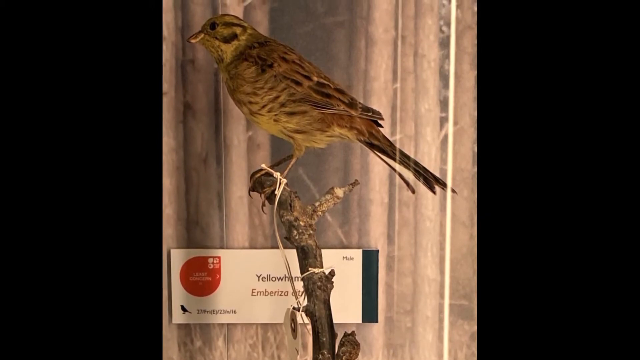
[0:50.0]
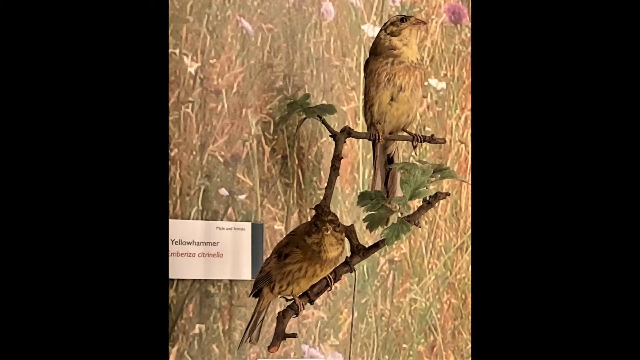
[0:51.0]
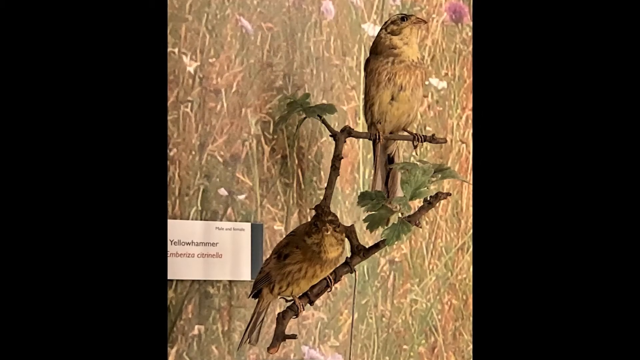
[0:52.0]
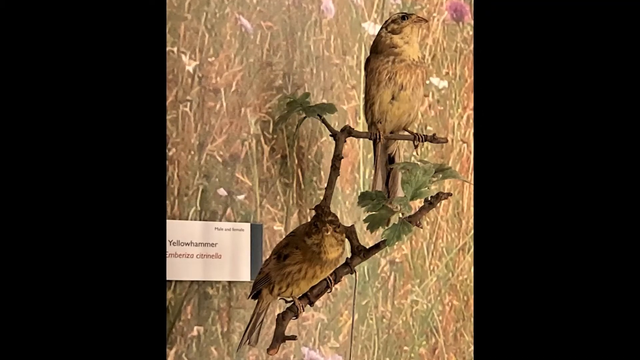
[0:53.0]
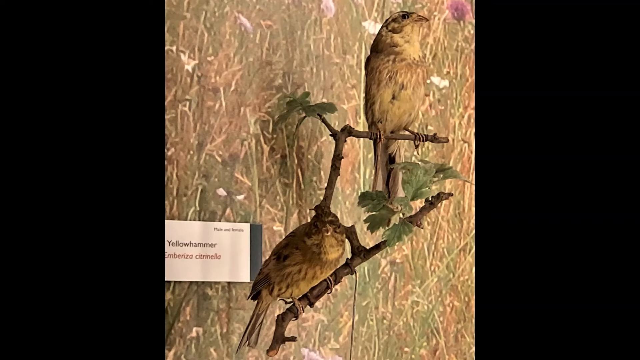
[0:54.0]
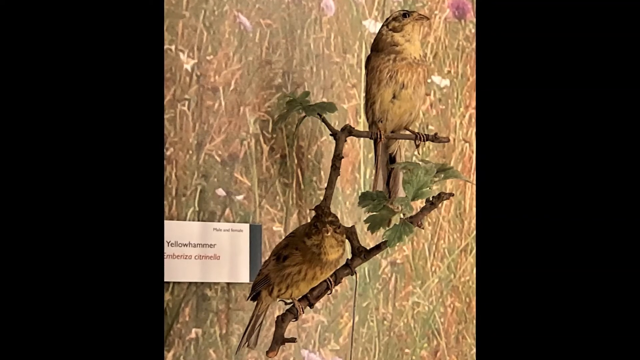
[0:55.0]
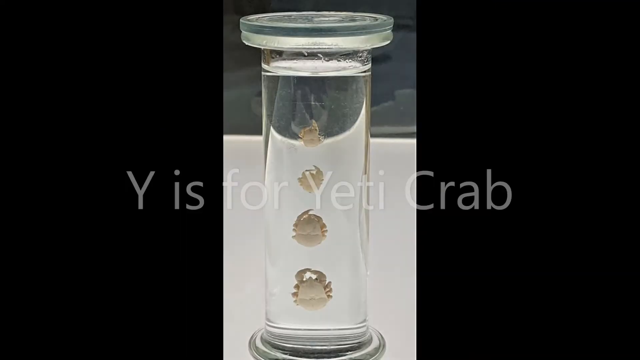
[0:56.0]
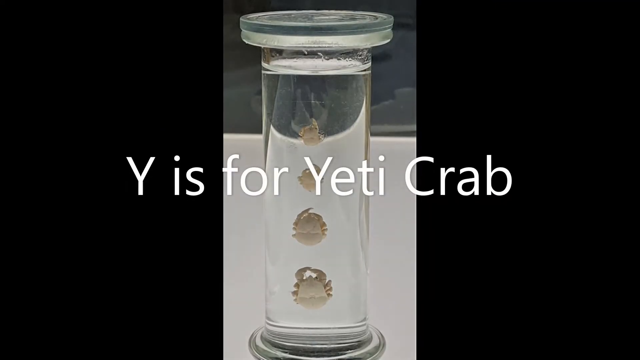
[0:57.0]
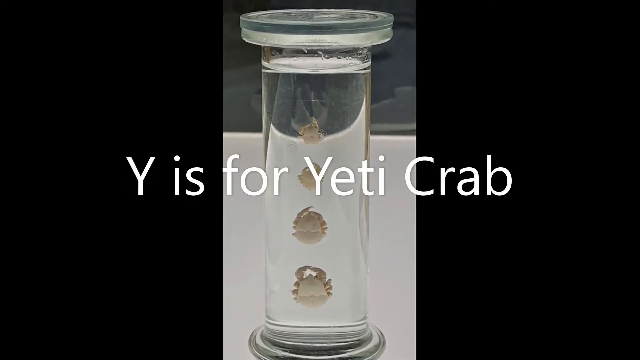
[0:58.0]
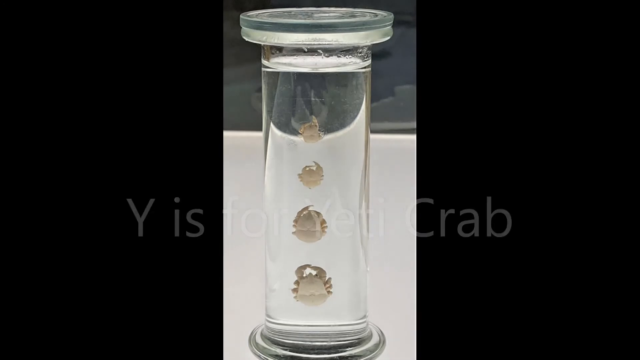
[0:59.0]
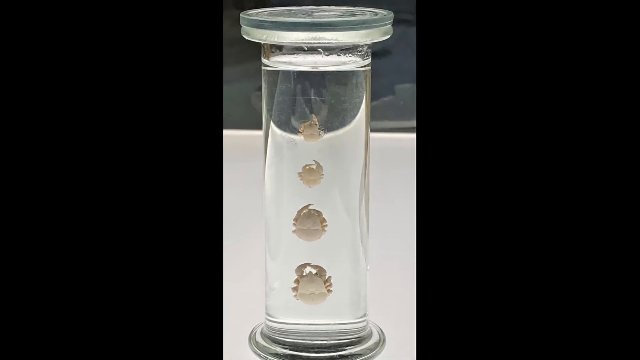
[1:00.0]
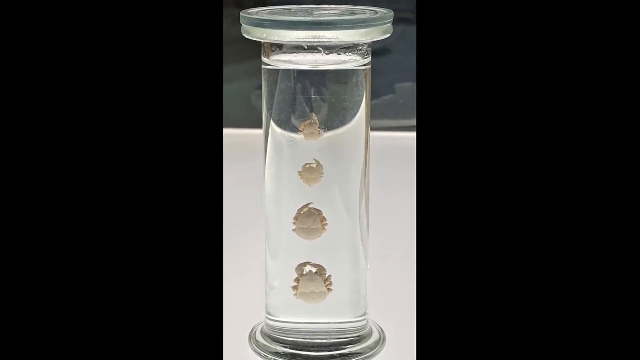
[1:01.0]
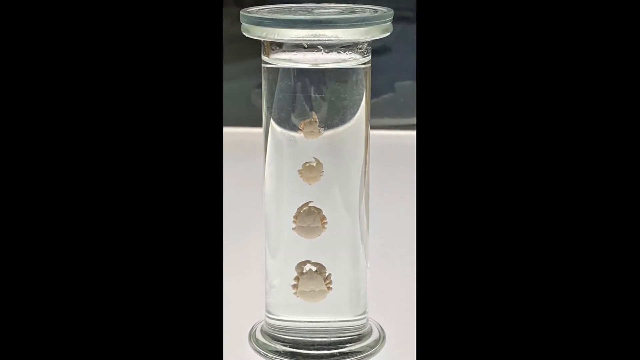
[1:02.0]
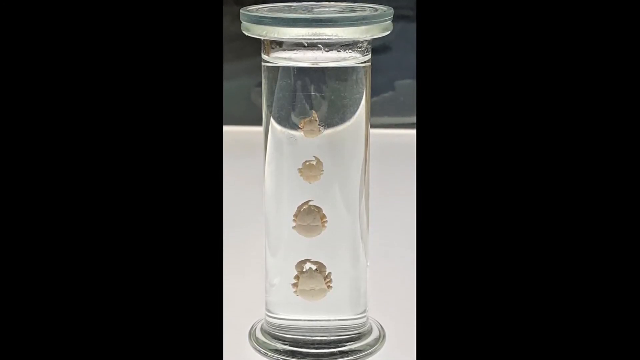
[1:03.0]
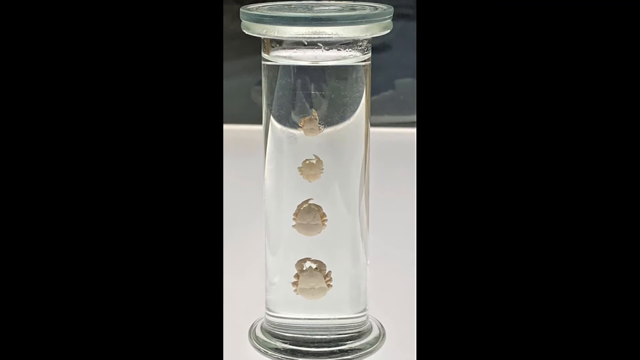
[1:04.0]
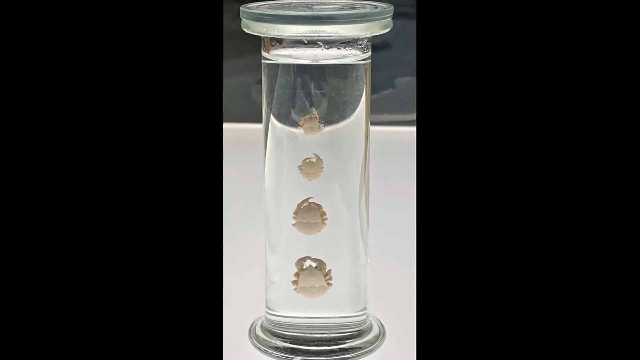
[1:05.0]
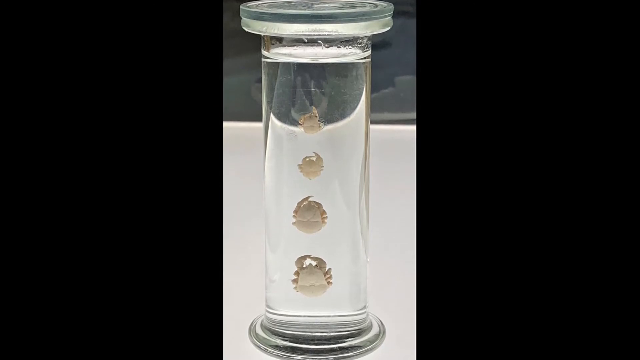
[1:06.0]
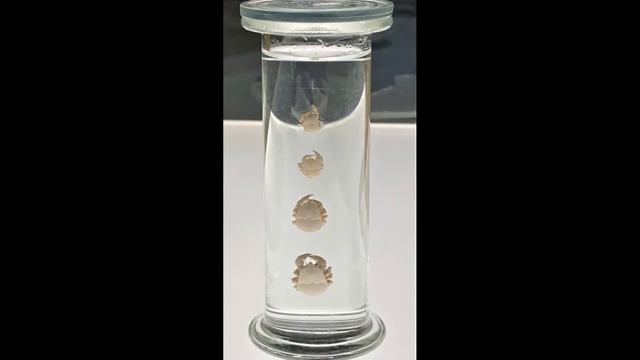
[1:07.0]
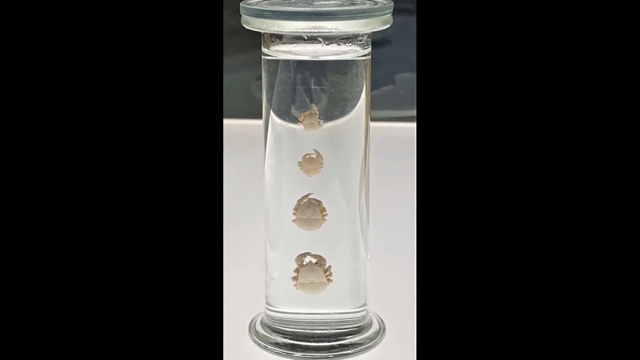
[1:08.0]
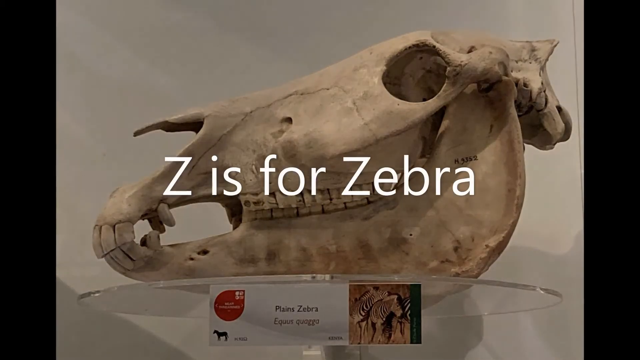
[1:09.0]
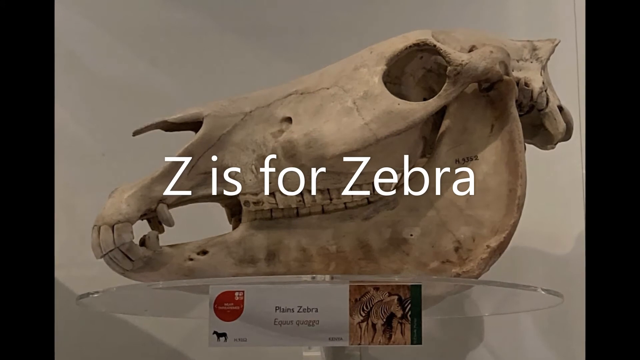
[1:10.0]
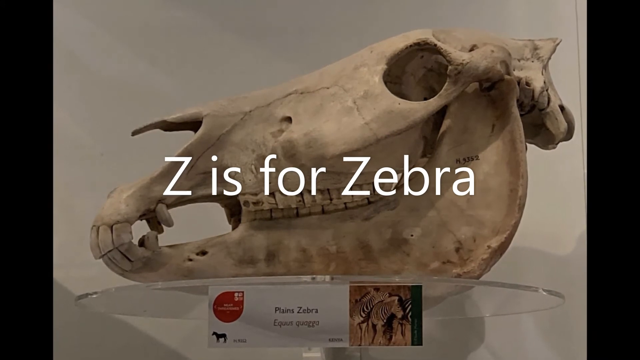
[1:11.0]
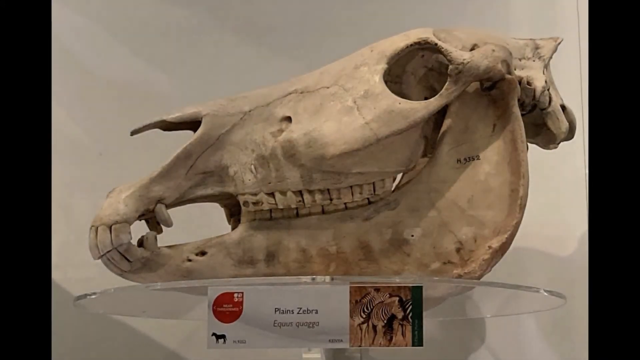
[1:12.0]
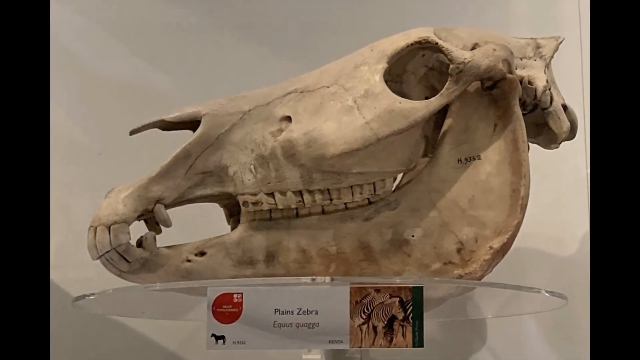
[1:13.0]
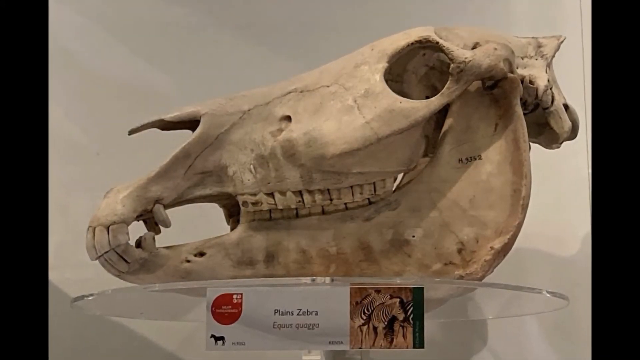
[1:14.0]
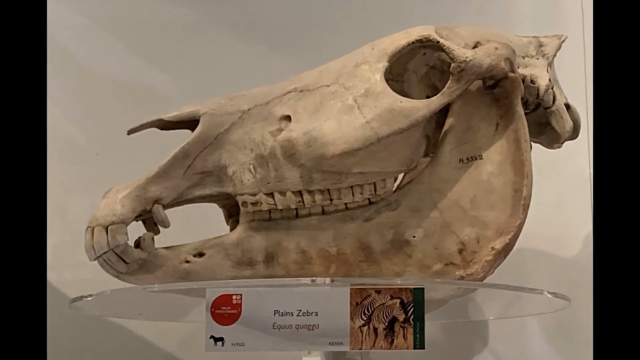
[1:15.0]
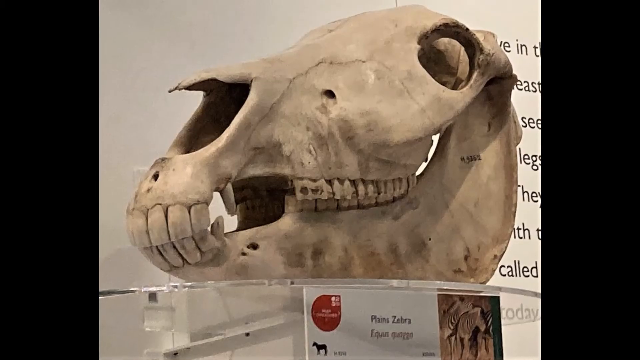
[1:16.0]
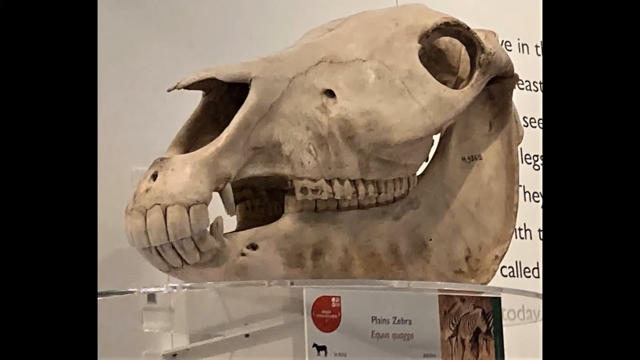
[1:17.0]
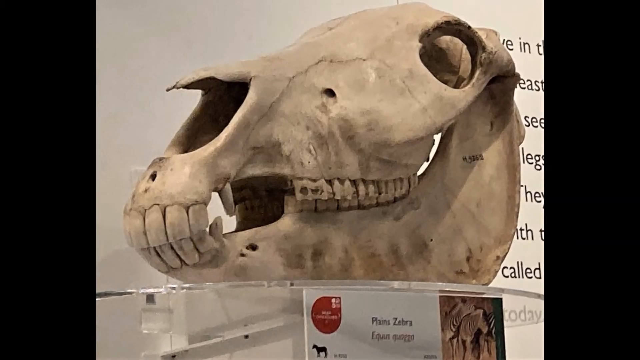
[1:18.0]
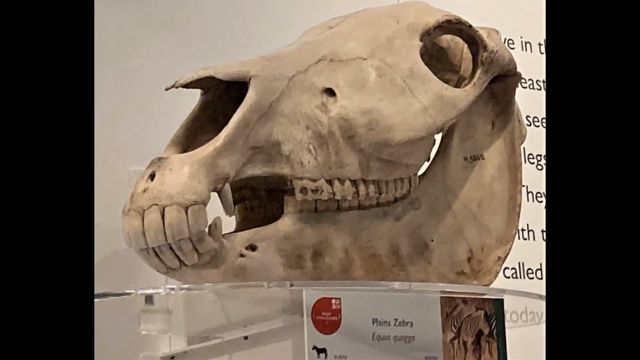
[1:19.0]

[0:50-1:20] Two yellowhammer birds are on two different branches, one on the upper branch and one on the lower, one facing left and one facing right. Next comes yeti crab, showing different stages of a crab inside a horizontal glass container full of water. Then "Z is for Zebra" appears, showing the head of a zebra and what its skeleton looks like, with the nose and eyes. The zebra skull is then turned slightly so the eye sockets, teeth and shape of the head can be seen. The background is white, and the skull is on a glass circle; below it is a picture explaining what type of zebra it is and showing what it would look like alive.